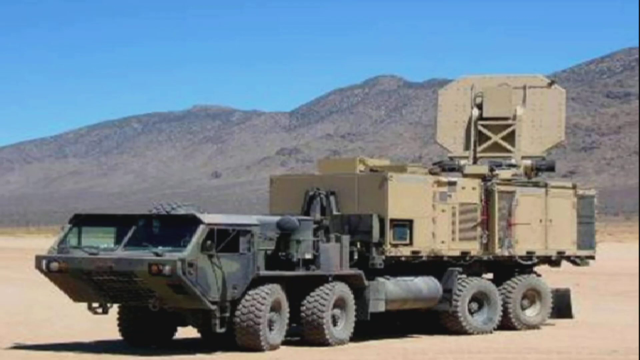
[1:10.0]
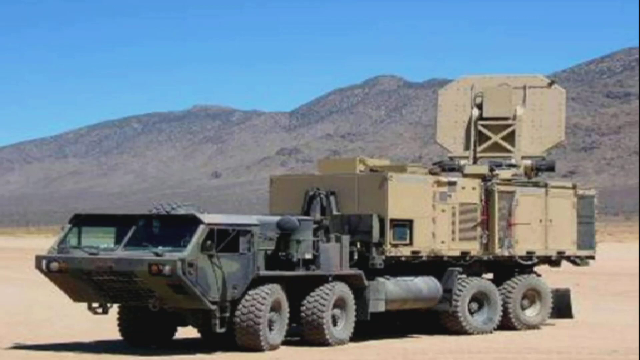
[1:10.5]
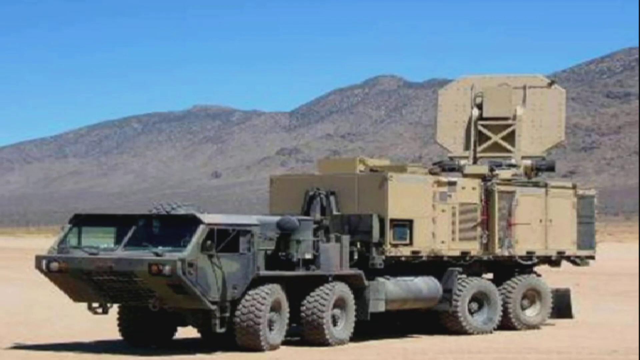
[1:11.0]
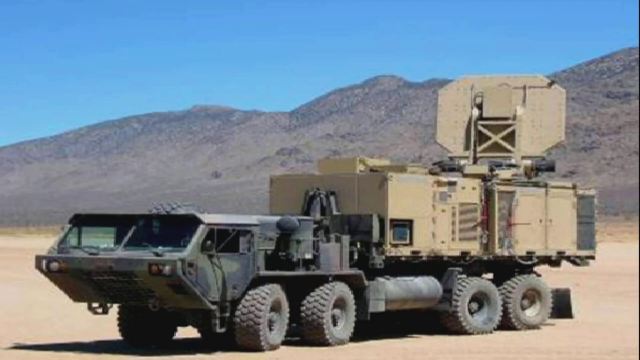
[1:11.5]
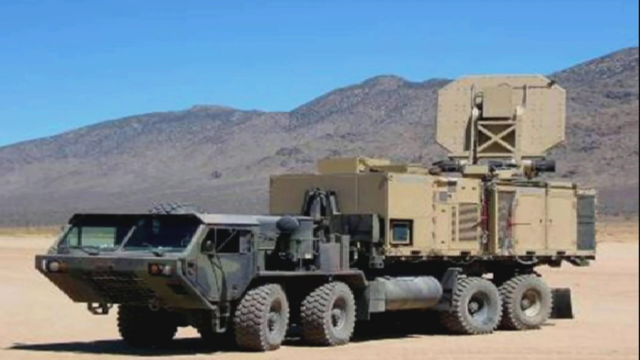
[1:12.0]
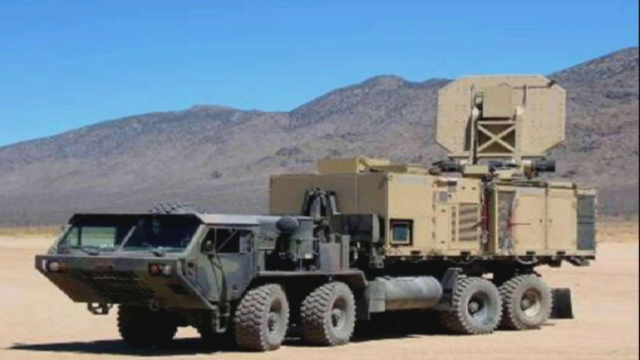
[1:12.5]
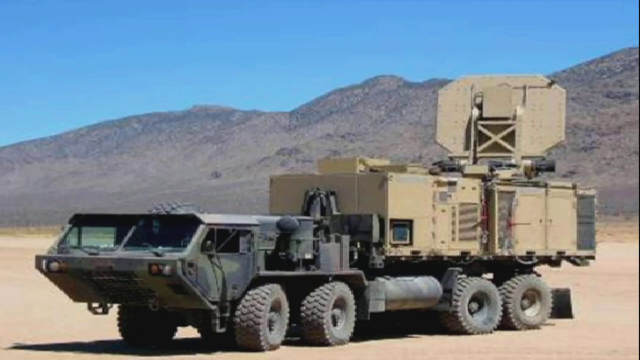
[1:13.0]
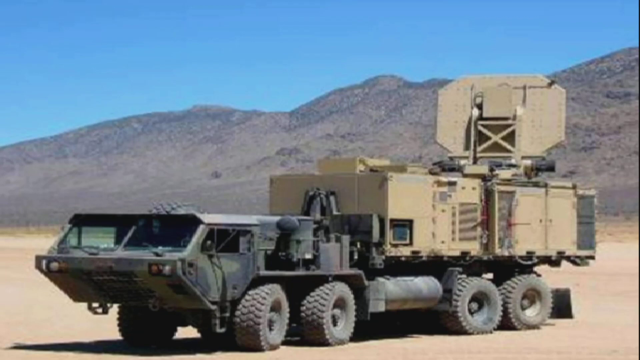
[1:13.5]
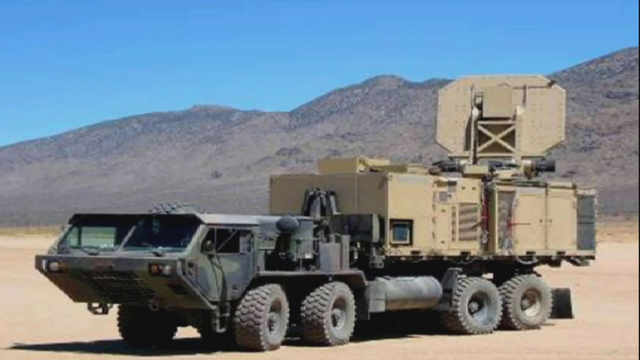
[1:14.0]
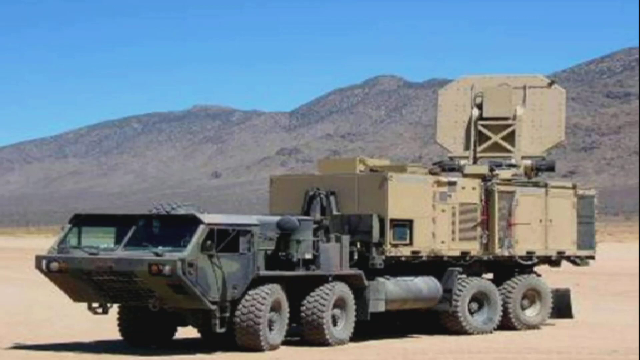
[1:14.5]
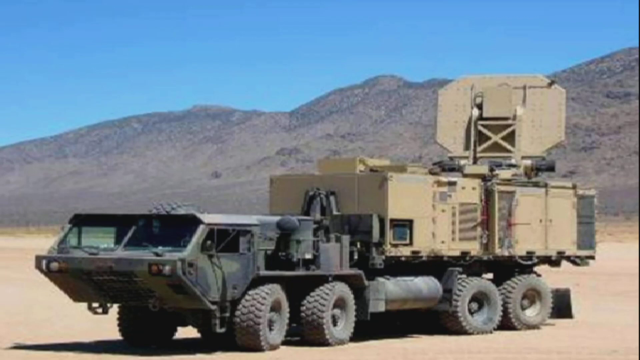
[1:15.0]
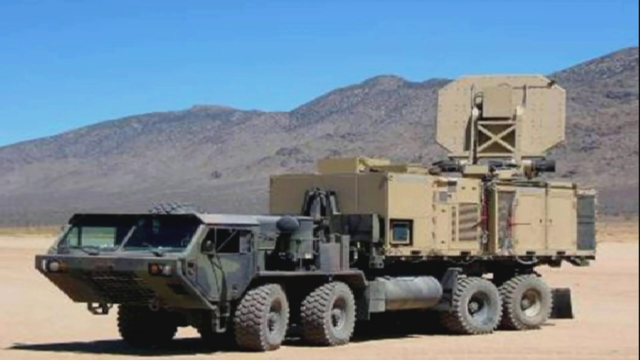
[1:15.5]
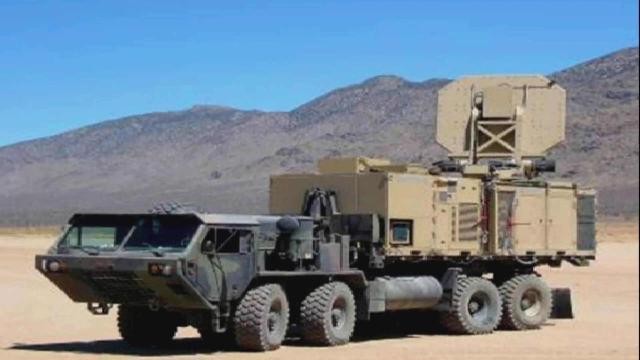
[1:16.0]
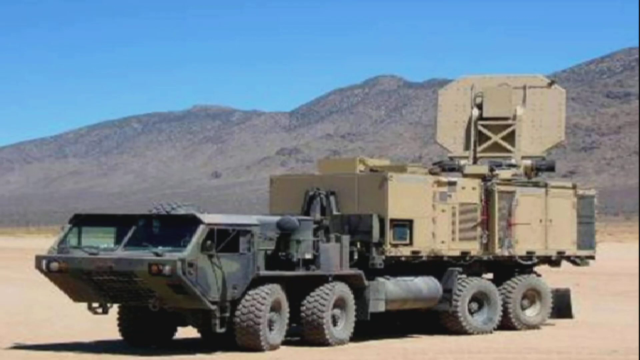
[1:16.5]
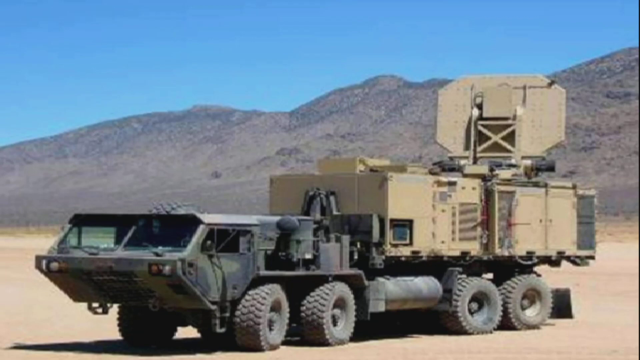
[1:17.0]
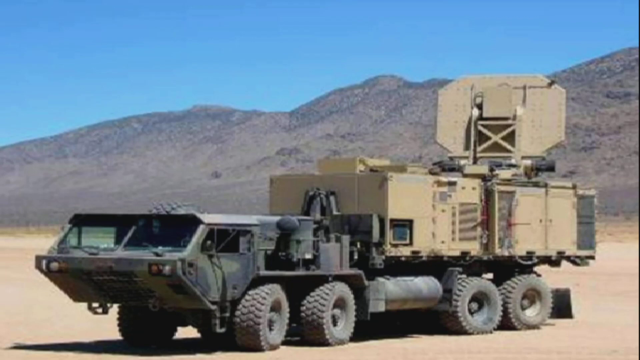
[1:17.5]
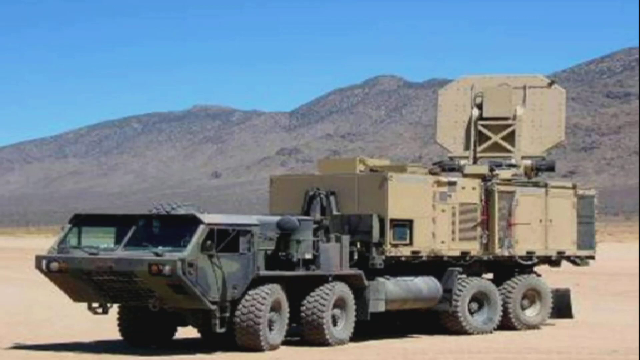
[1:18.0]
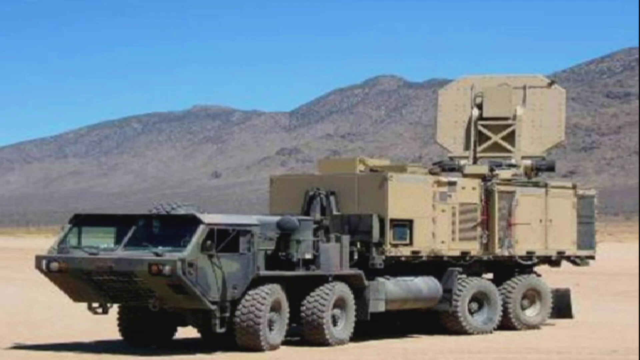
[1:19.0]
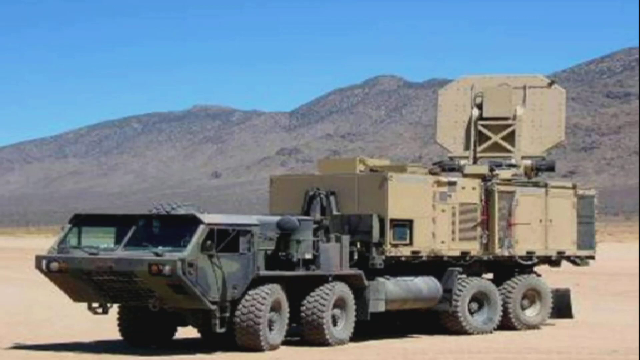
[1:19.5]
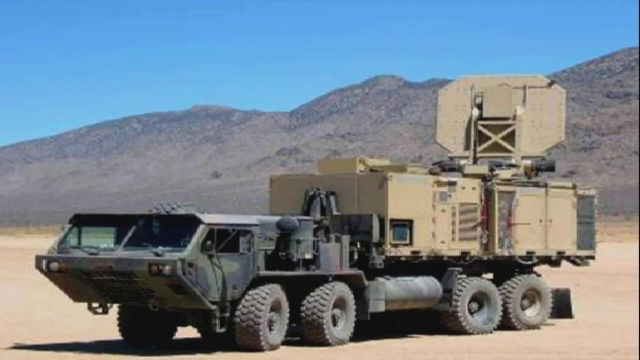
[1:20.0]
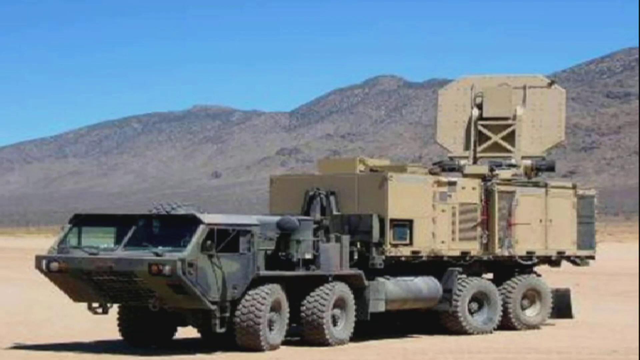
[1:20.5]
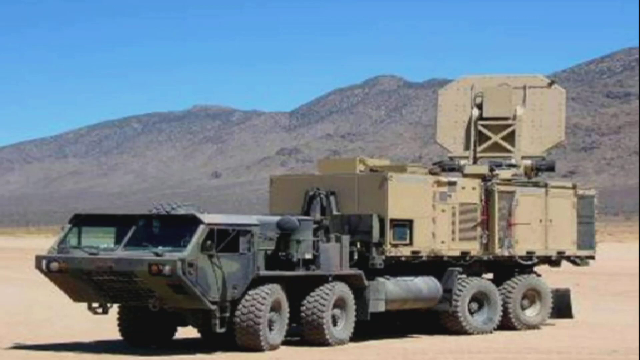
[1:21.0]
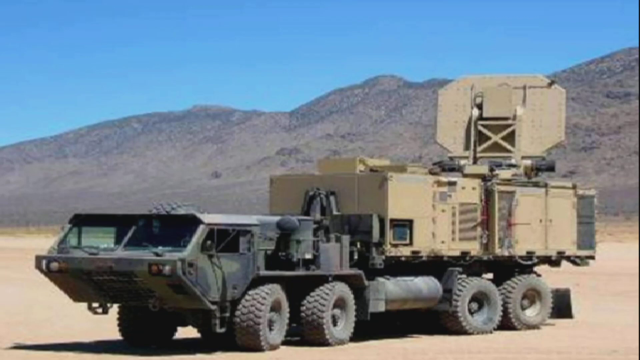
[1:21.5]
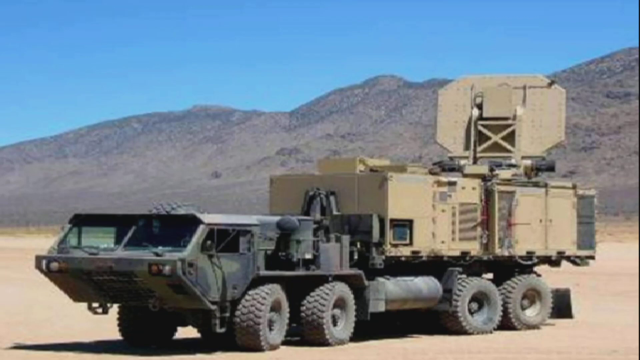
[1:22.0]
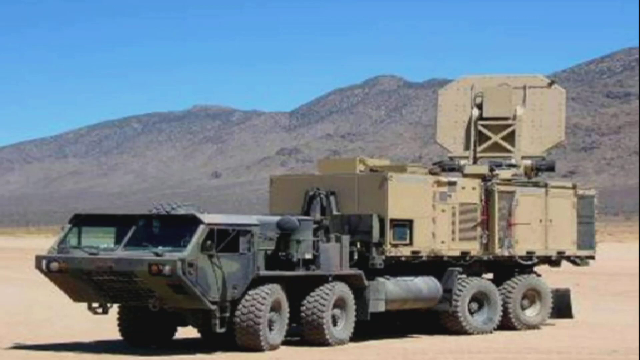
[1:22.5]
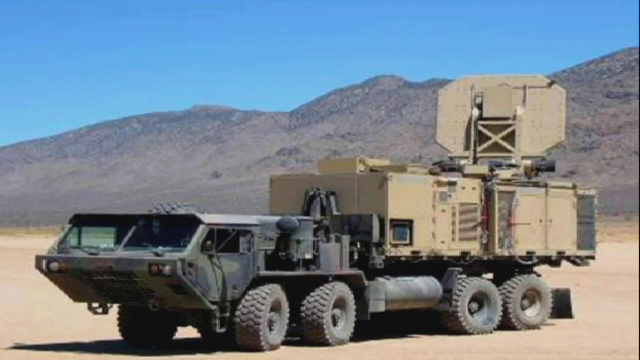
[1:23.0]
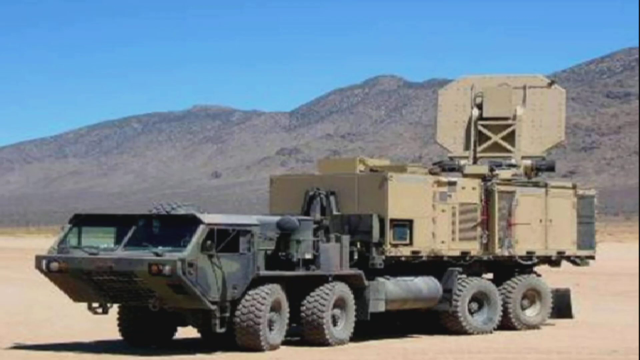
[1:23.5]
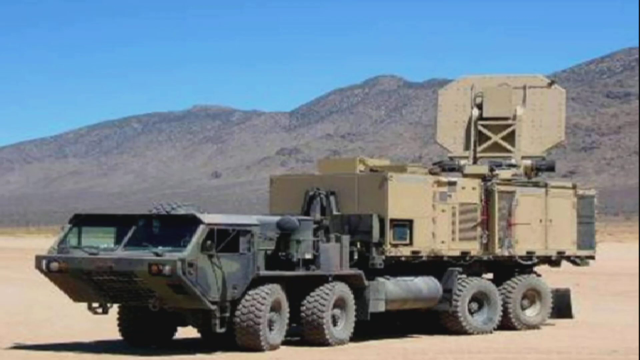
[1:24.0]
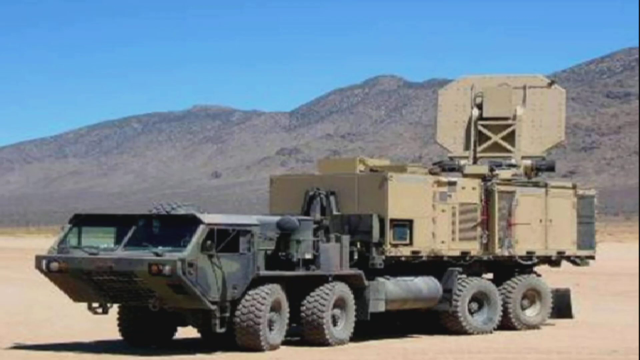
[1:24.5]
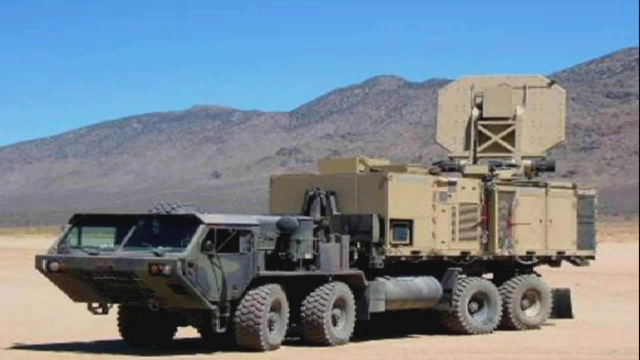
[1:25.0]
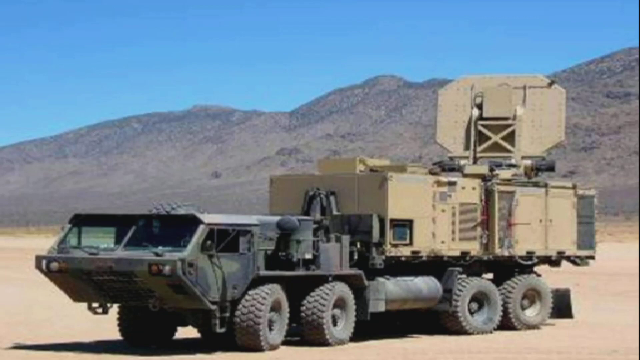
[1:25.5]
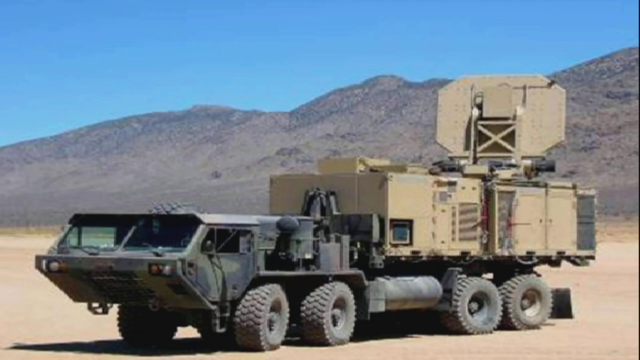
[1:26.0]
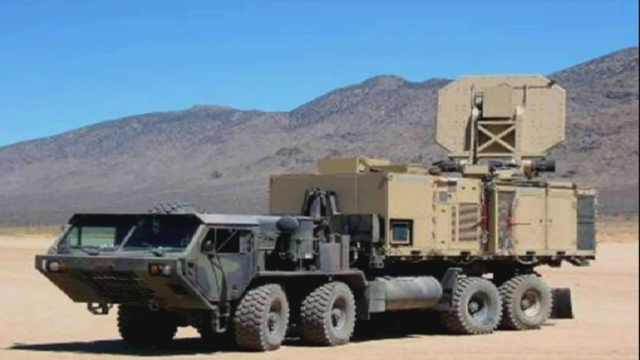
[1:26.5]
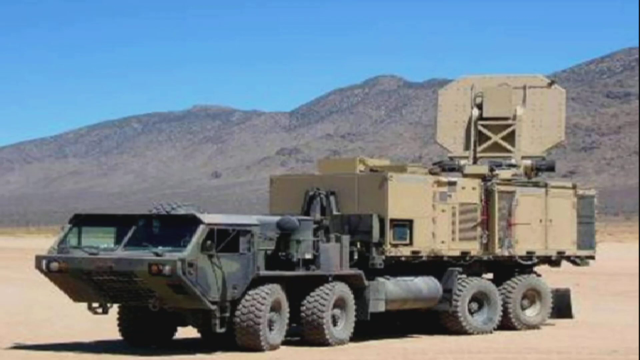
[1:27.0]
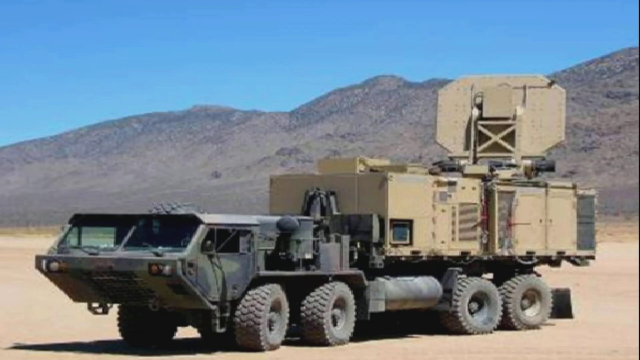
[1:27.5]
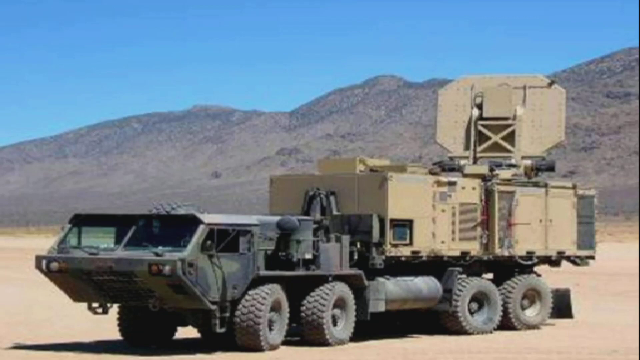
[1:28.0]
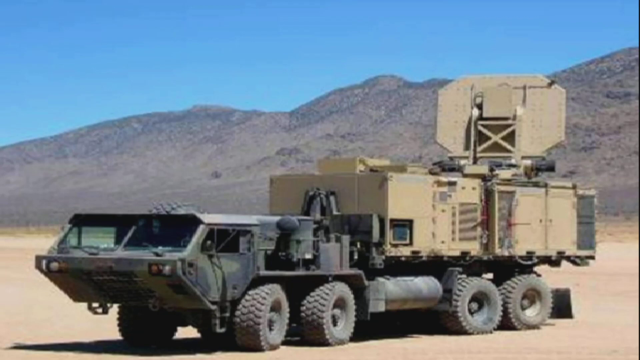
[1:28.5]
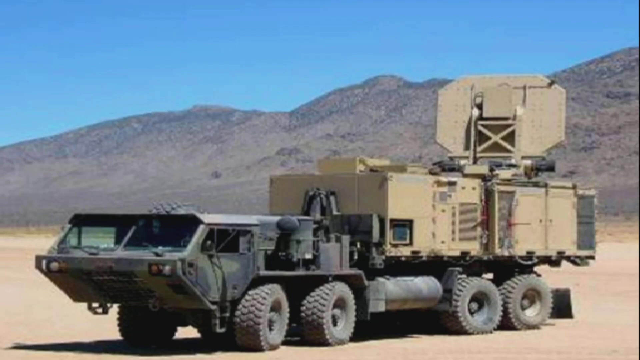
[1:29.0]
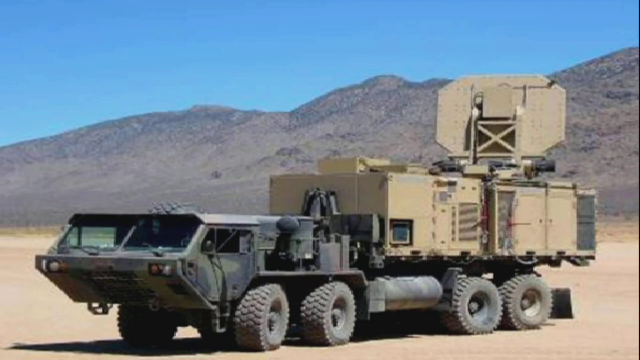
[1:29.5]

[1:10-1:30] The truck continues to be shown; four wheels are visible, and the front of it is camouflaged, suggesting it belongs to soldiers. It looks heavy and strong, with a space where equipment could be loaded.